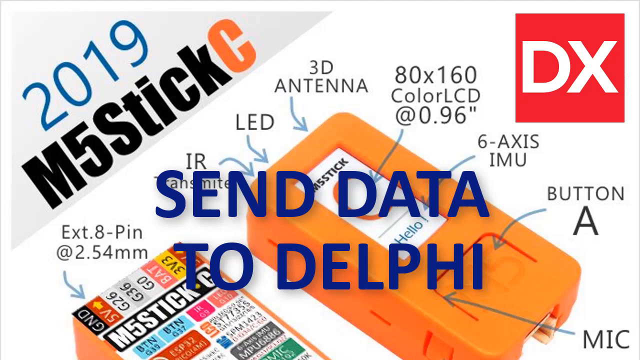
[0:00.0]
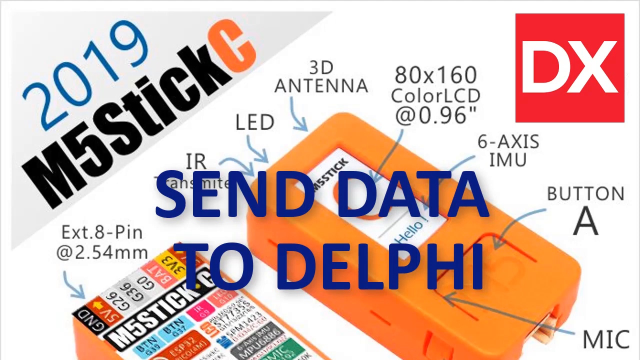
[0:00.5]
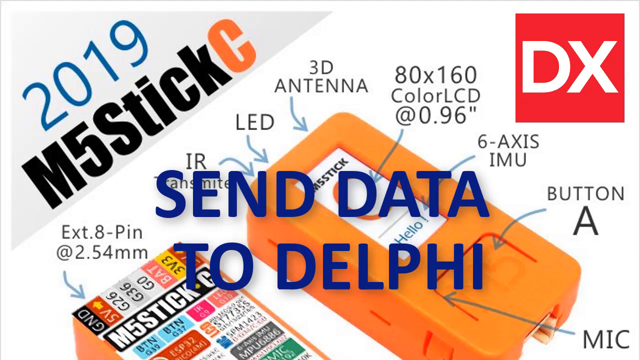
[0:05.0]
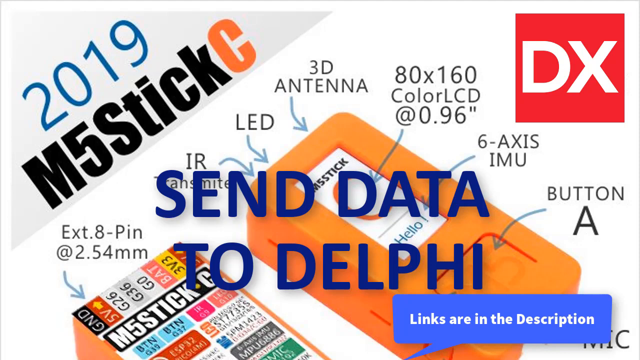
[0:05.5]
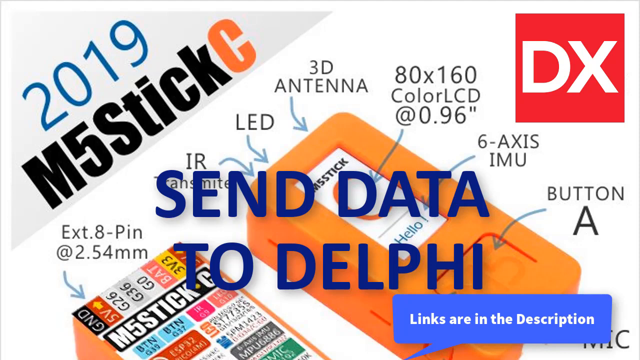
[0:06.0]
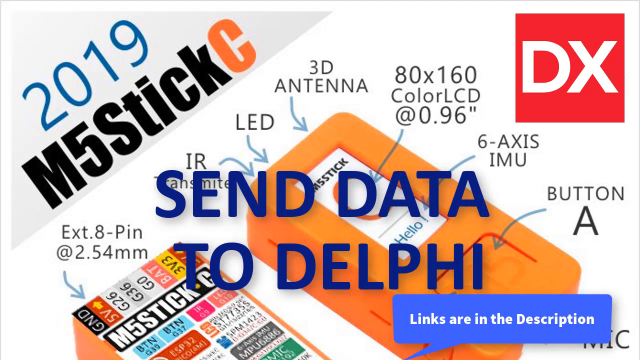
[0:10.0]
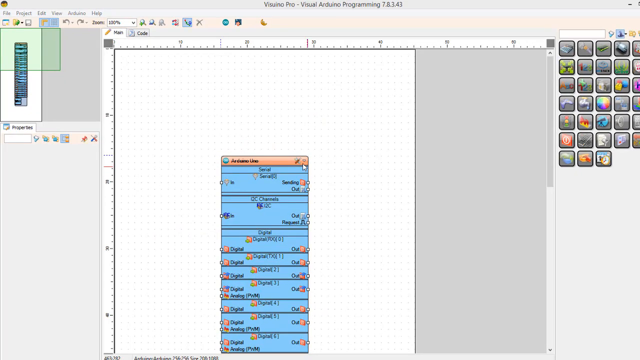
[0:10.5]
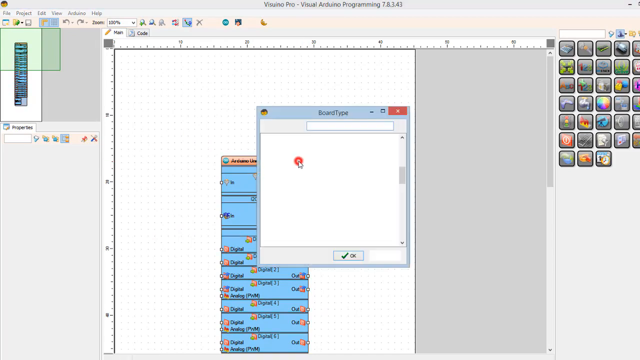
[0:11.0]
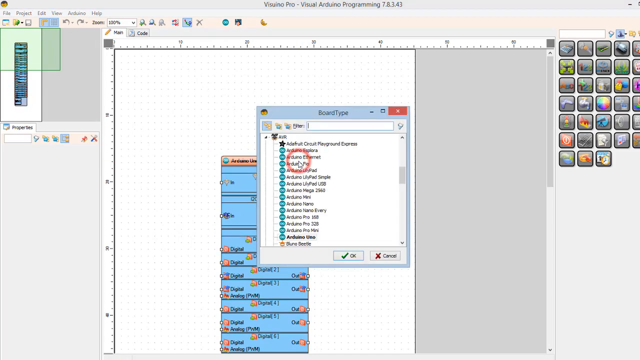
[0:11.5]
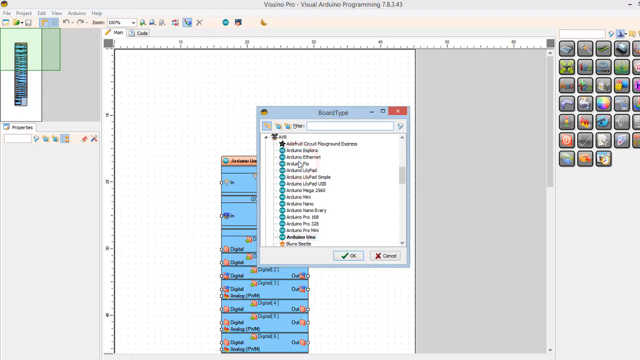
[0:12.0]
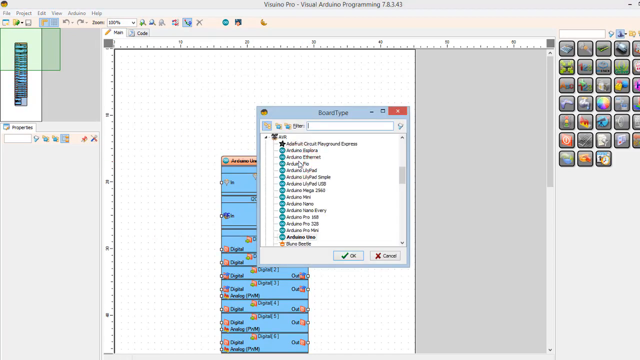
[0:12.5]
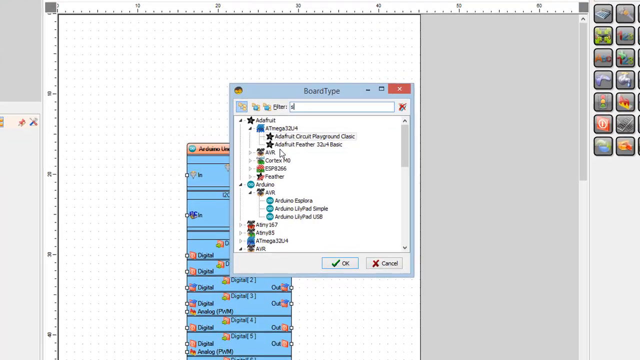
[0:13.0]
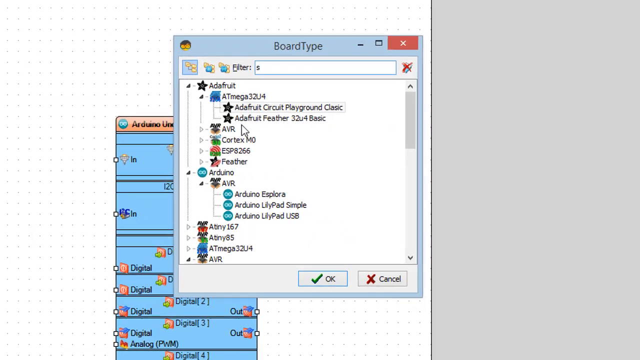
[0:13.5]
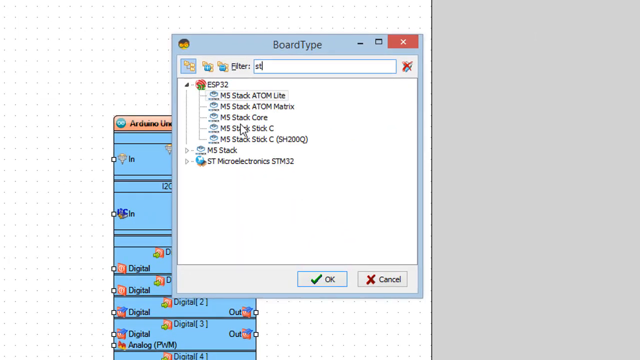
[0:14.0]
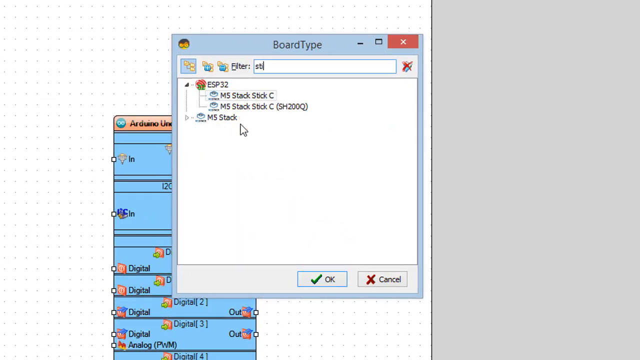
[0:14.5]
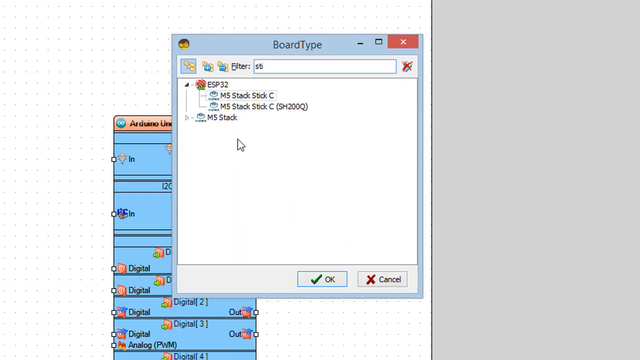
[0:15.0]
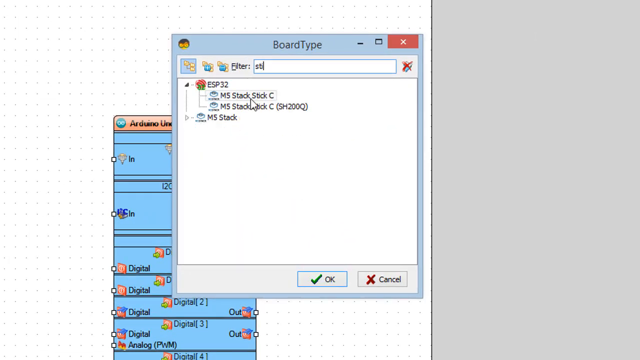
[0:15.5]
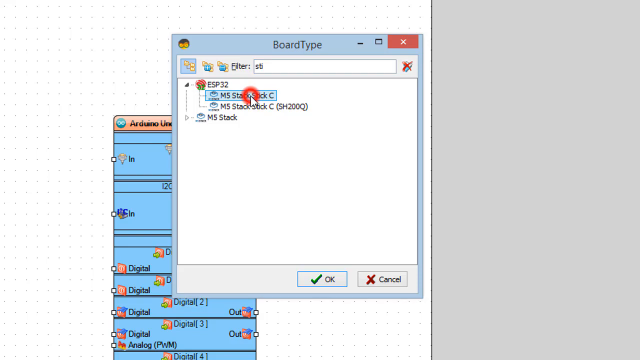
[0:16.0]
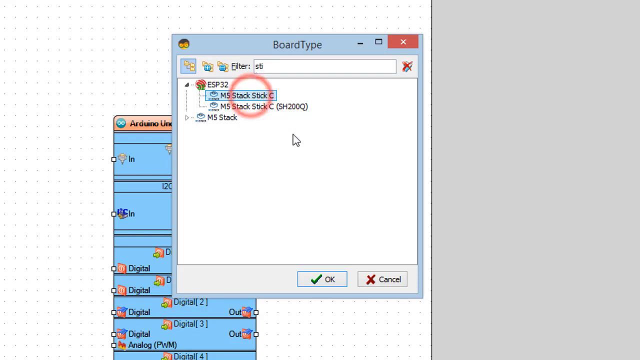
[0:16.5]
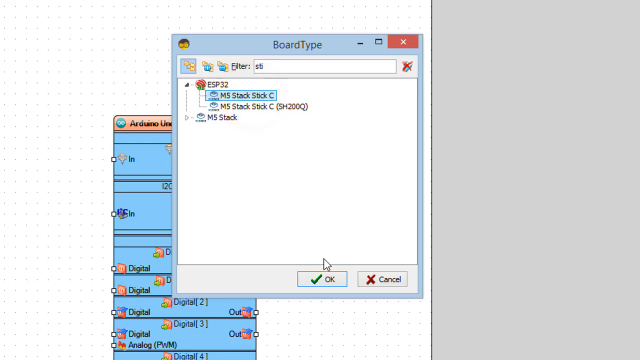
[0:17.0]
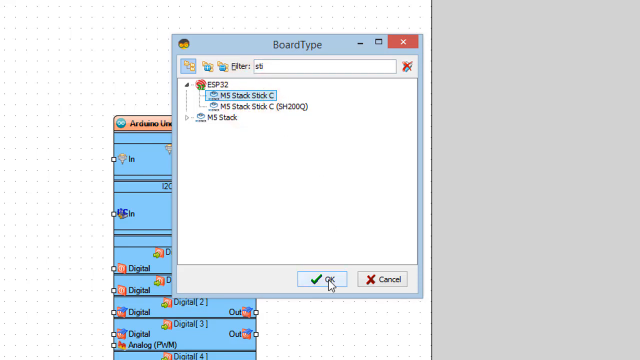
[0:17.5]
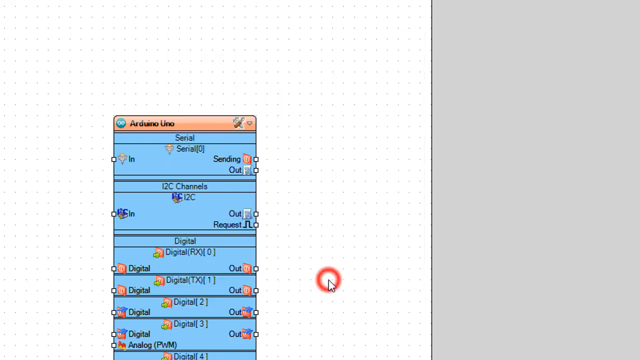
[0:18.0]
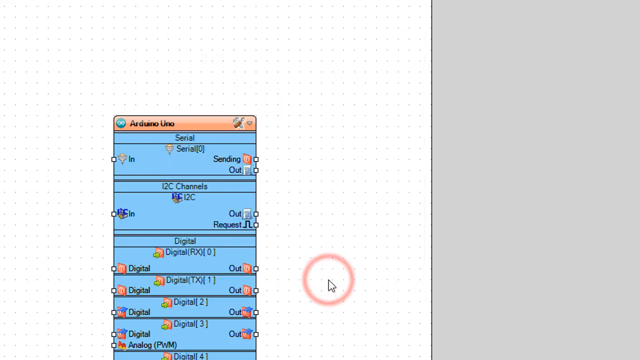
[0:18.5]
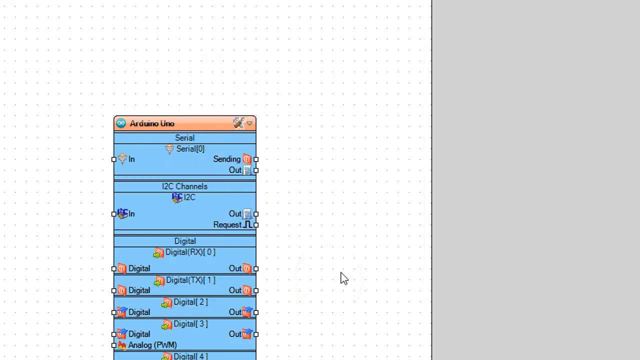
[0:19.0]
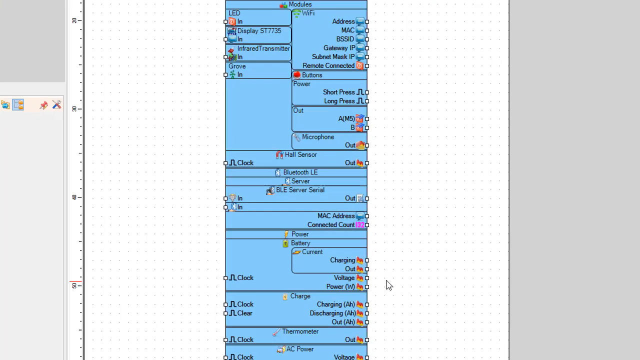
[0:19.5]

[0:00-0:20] At the start of the recording, text reads "2019 N5 Stick C sent to Delphi DX" over an annotated image. The annotations include "button A", "6-axis IMU", "80 times 160 color LCD at 0.96 inches", "3D antenna", "LED", "IO transmitter" and "EXT.8-pin at 2.54mm". A pop-up then appears that says "word type in filter", and the user types "STI" into its bar. They click on "N5 Stock Stick C", which is clear because the mouse pointer has a red circle around it, and then click OK. The screen seems outdated.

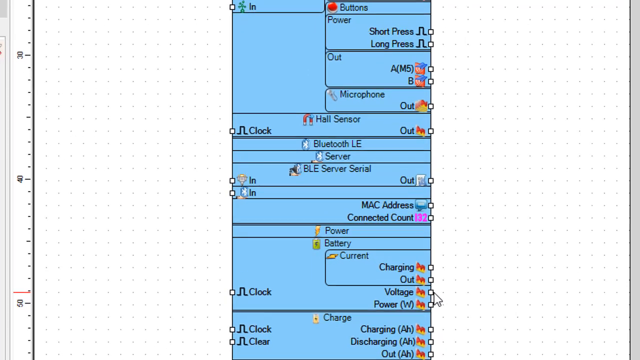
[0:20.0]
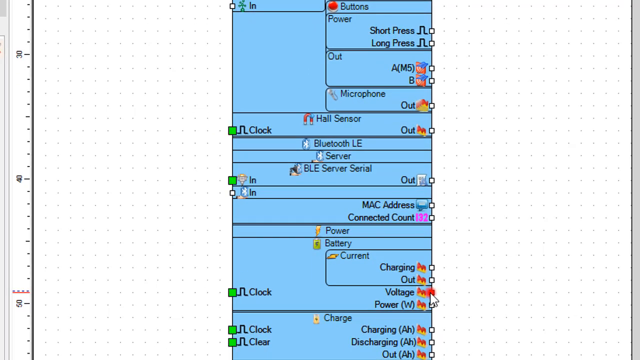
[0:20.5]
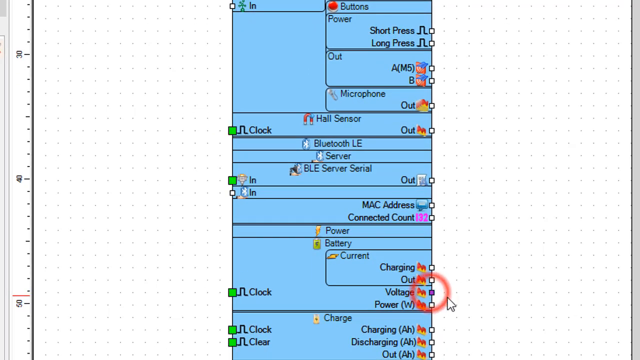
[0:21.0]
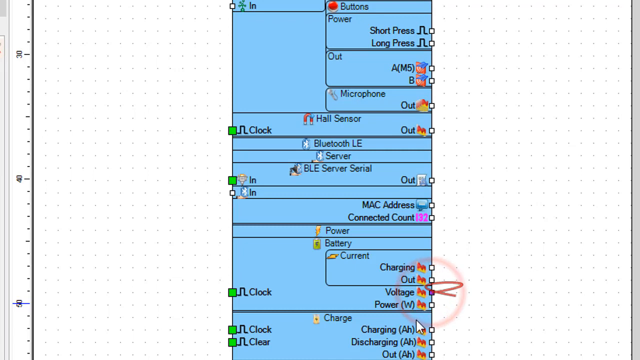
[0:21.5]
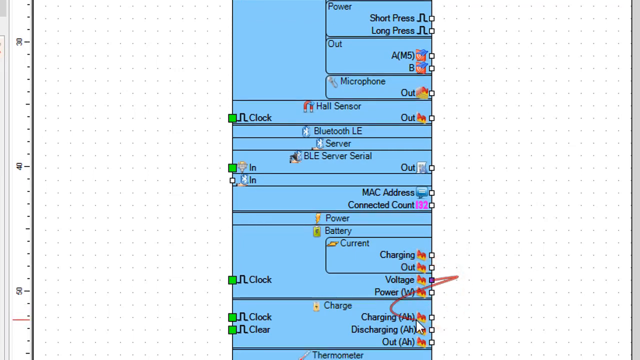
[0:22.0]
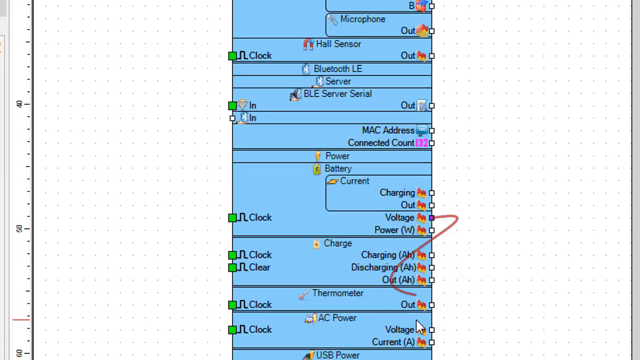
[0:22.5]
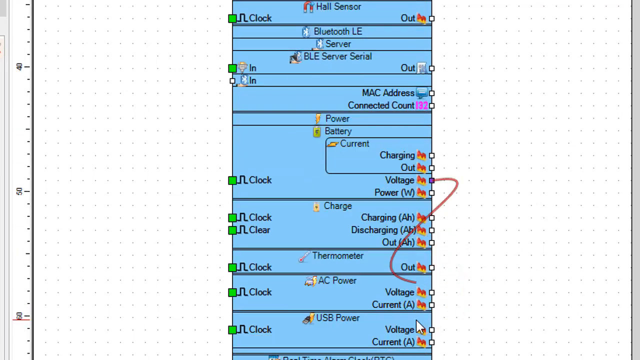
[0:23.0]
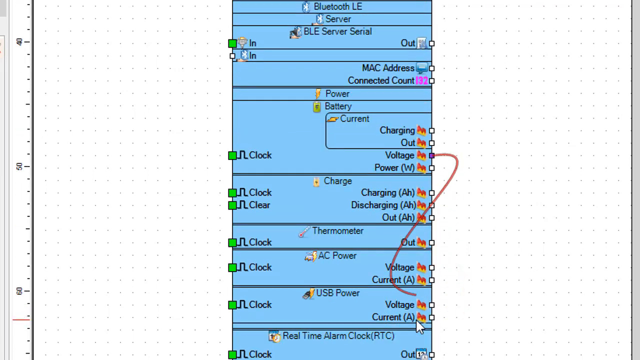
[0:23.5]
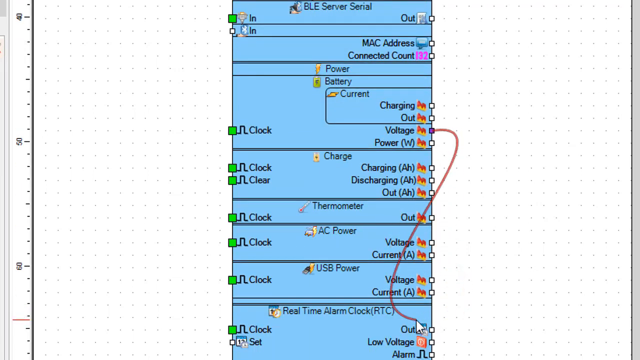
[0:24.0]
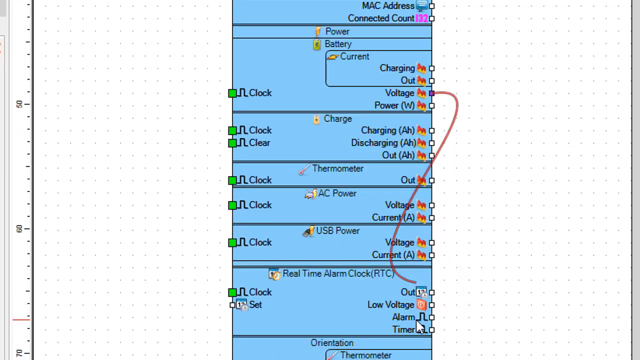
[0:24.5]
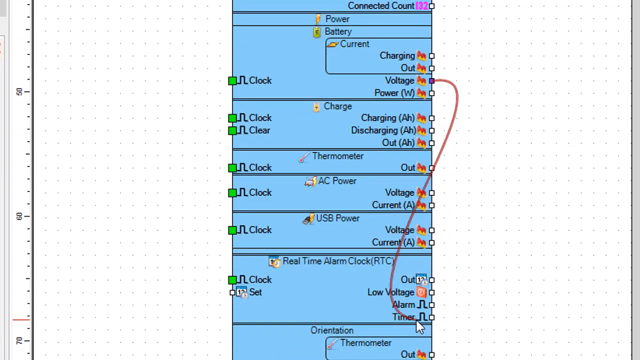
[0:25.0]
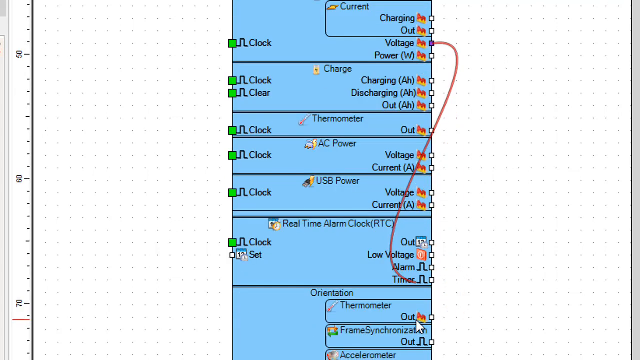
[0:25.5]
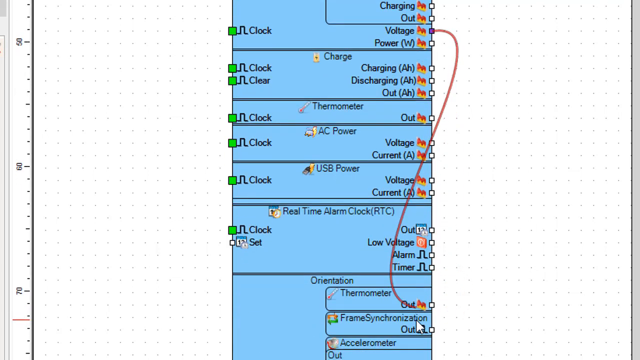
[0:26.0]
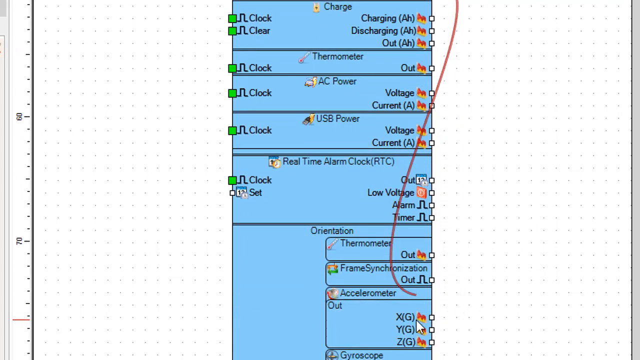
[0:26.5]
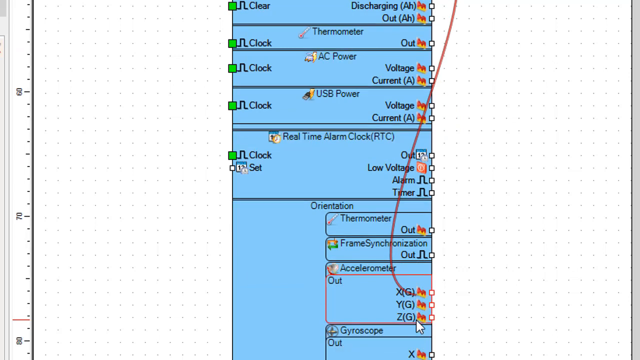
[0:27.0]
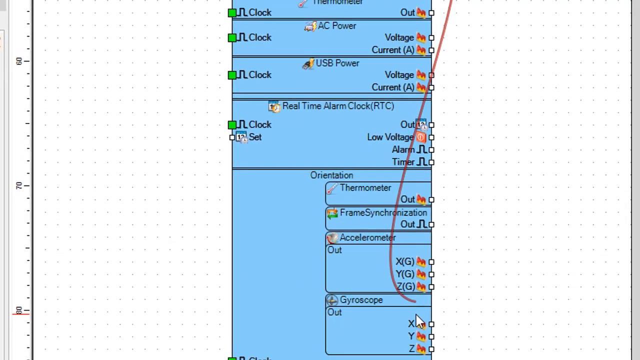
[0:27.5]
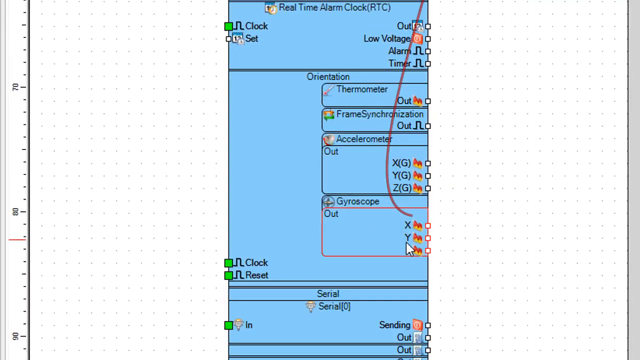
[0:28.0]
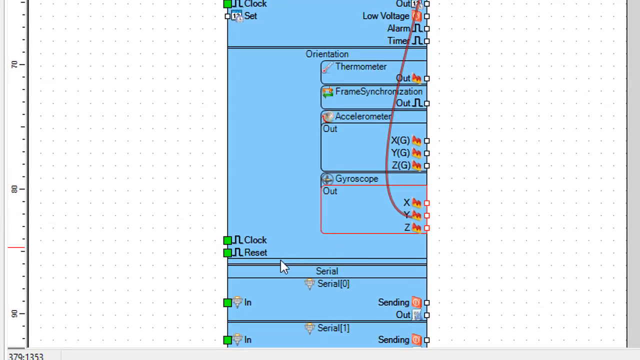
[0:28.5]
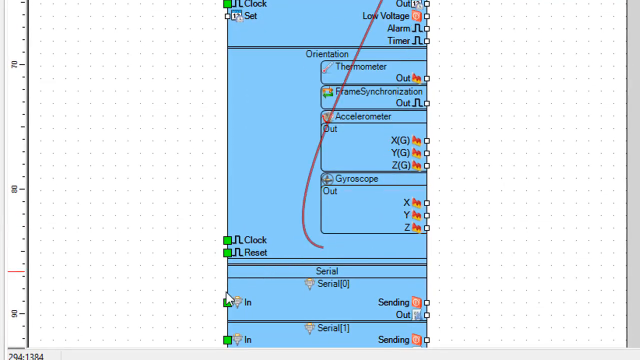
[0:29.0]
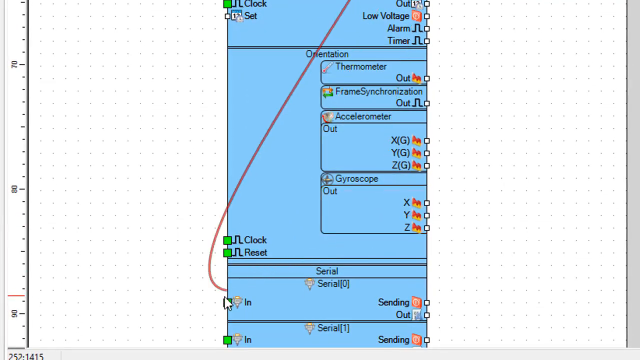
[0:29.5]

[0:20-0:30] A blue box with a bunch of words is shown. The mouse is on the right side, hovering over what seems to say voltage, power, charging, discharge and out. The user keeps scrolling and clicks the empty voltage box, which turns red. As they scroll down, a red line follows, and its other end apparently connects to the "in" box, which is green and on the left side of the blue box. The user clicks or hovers over "in" as the shot ends.